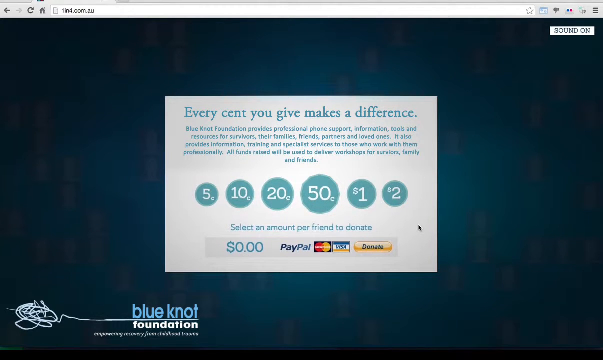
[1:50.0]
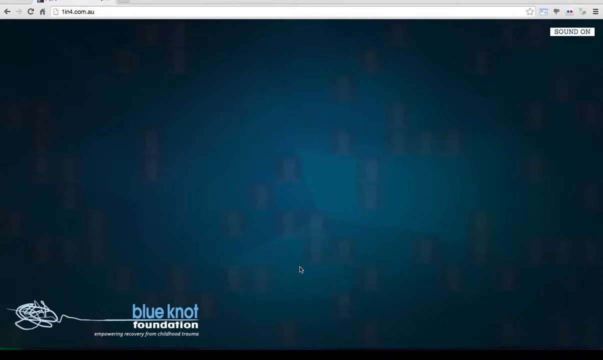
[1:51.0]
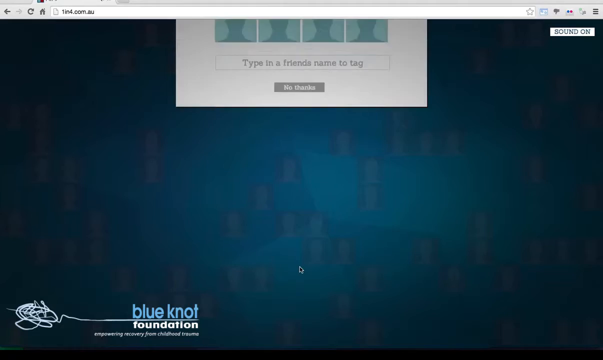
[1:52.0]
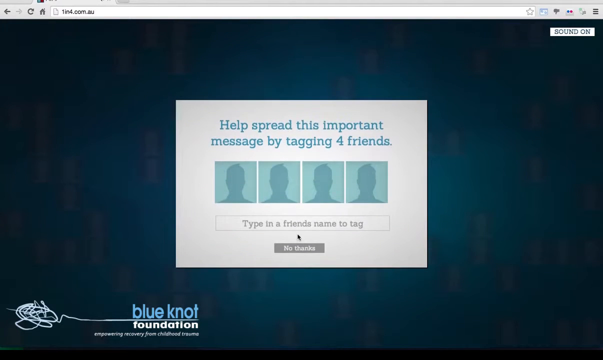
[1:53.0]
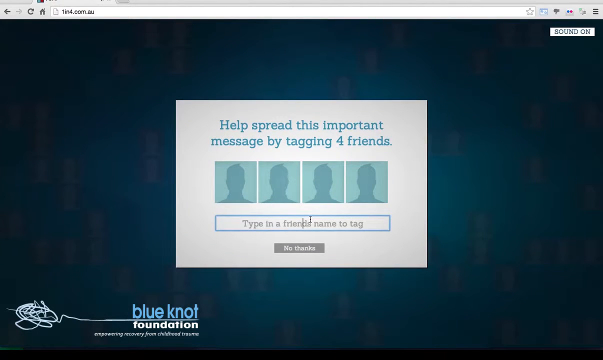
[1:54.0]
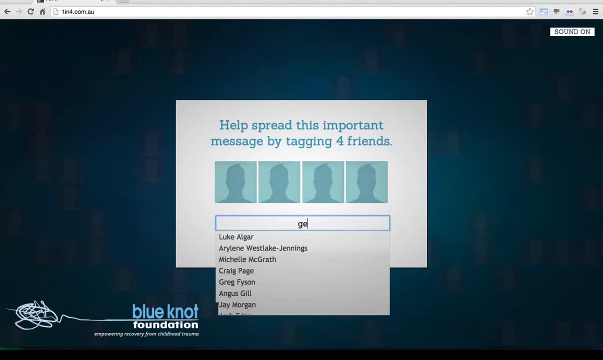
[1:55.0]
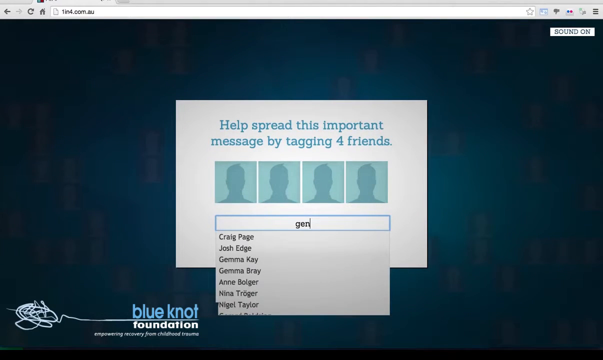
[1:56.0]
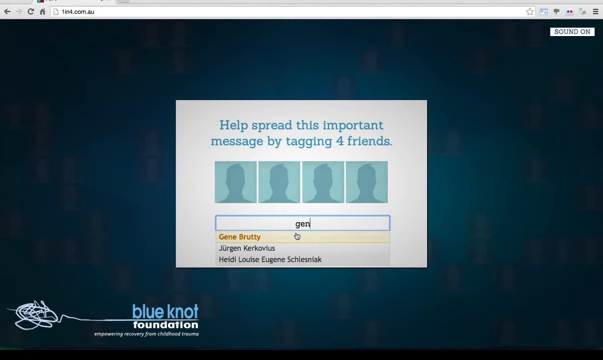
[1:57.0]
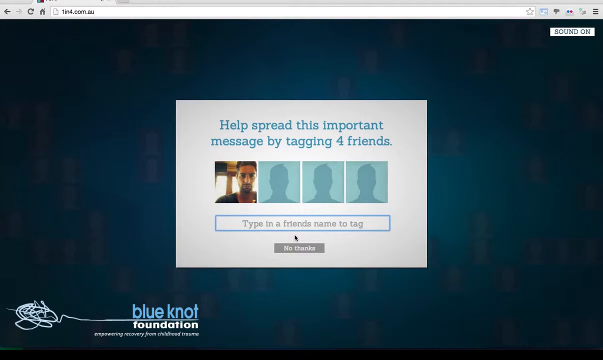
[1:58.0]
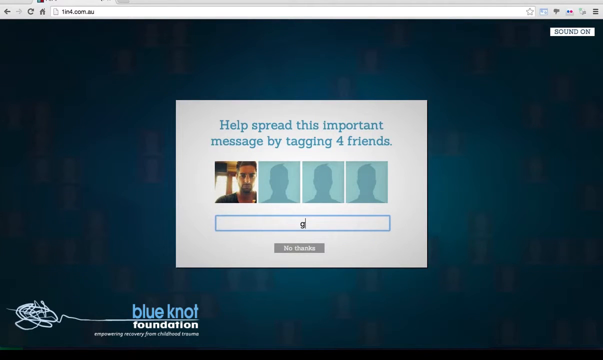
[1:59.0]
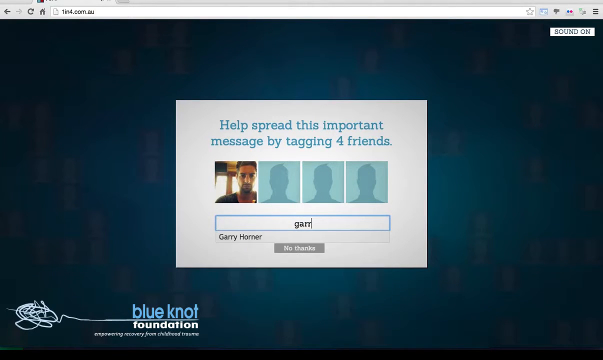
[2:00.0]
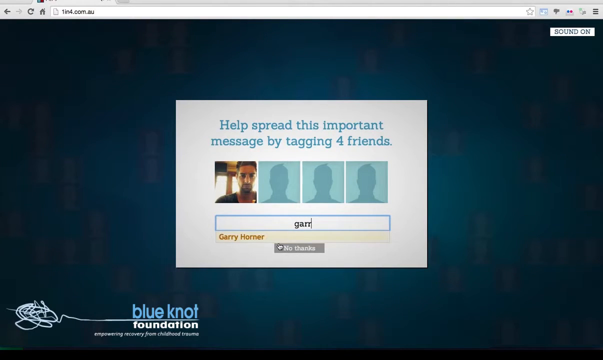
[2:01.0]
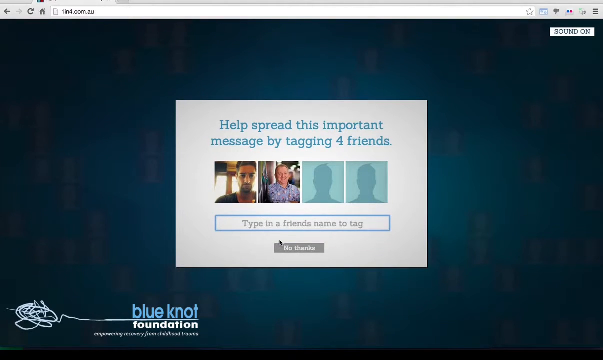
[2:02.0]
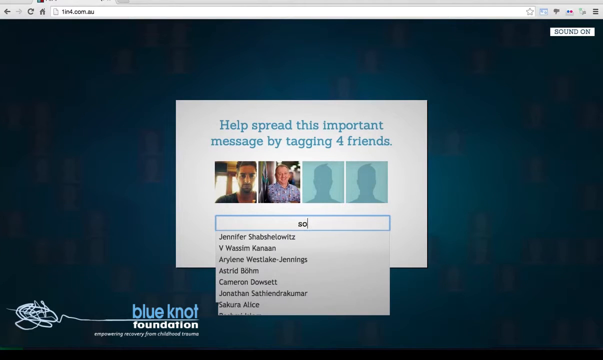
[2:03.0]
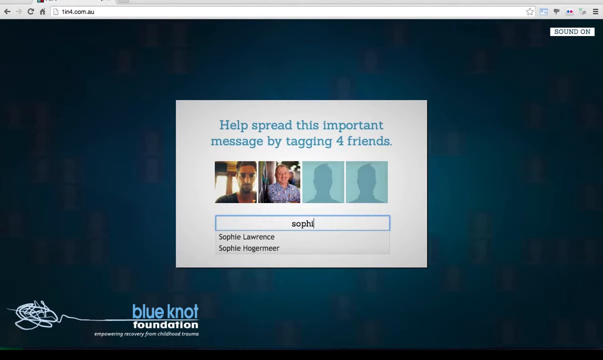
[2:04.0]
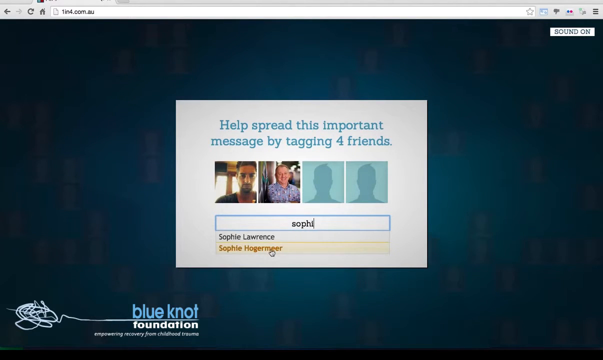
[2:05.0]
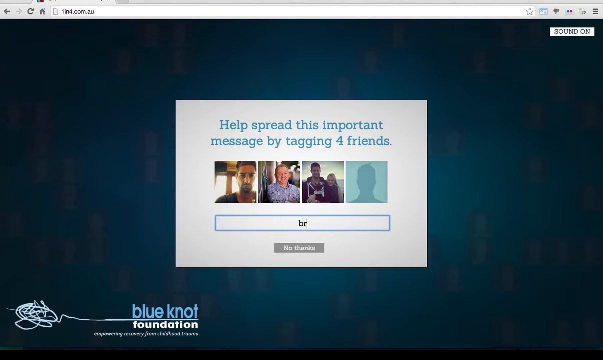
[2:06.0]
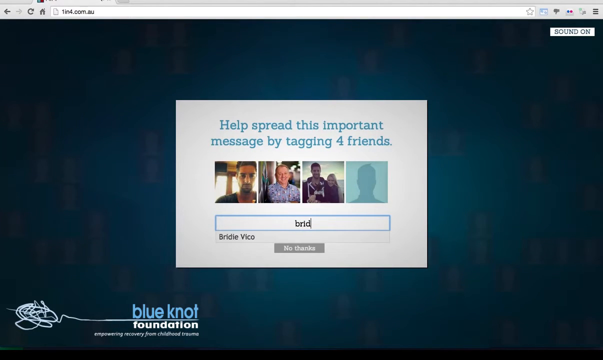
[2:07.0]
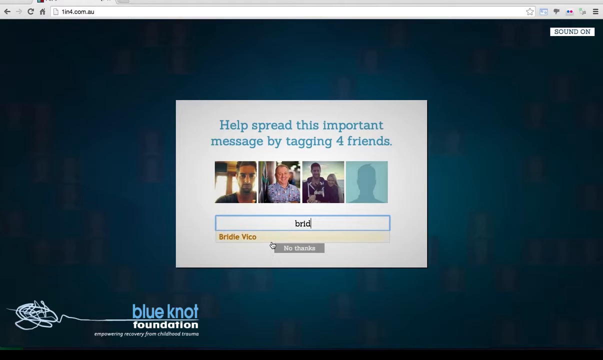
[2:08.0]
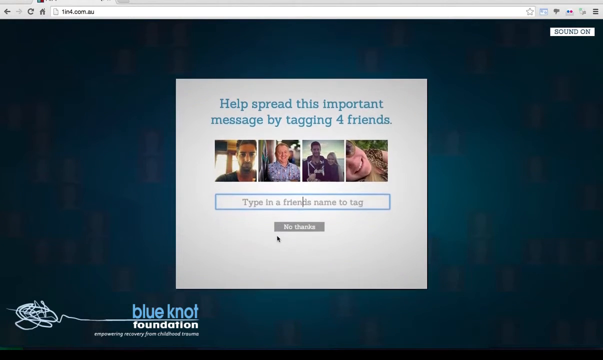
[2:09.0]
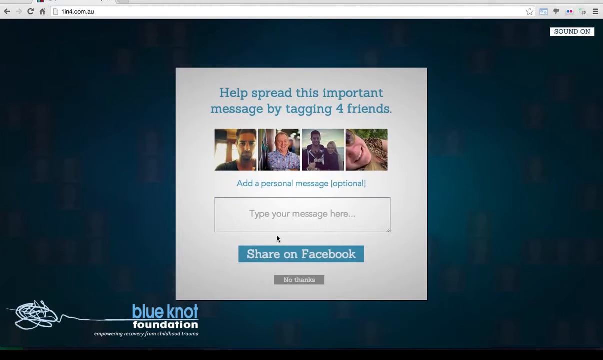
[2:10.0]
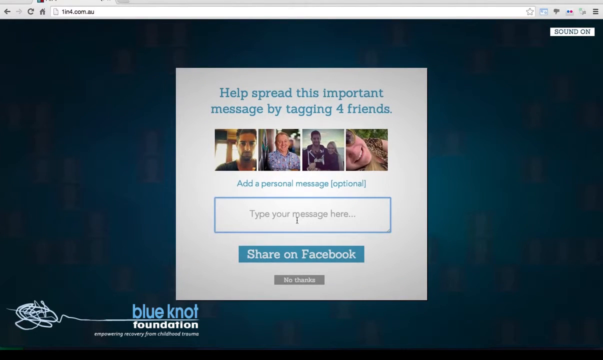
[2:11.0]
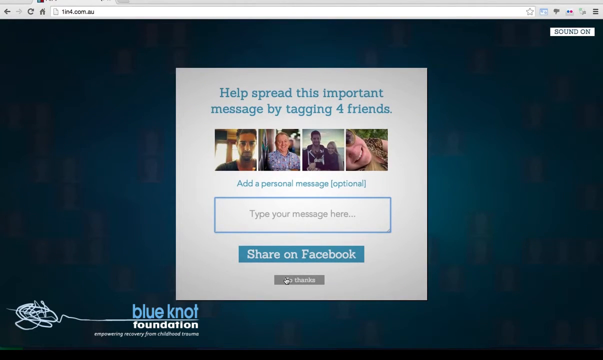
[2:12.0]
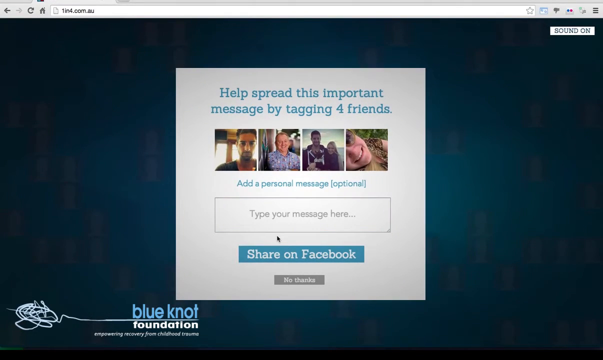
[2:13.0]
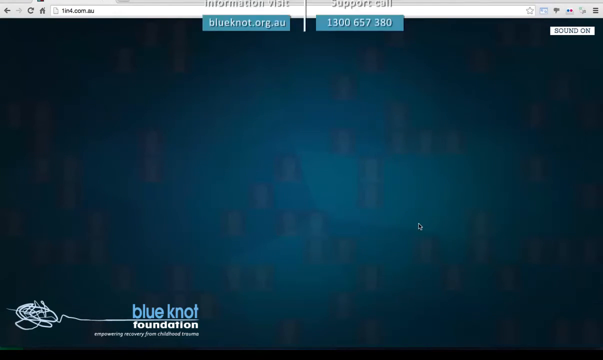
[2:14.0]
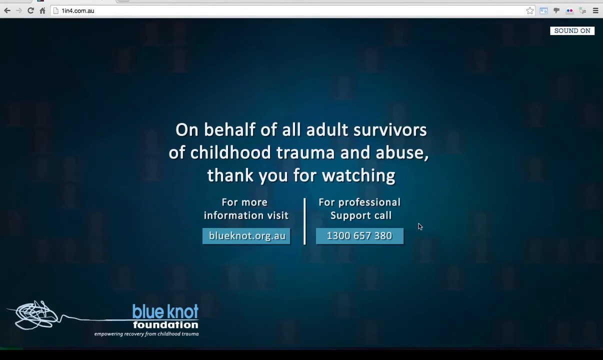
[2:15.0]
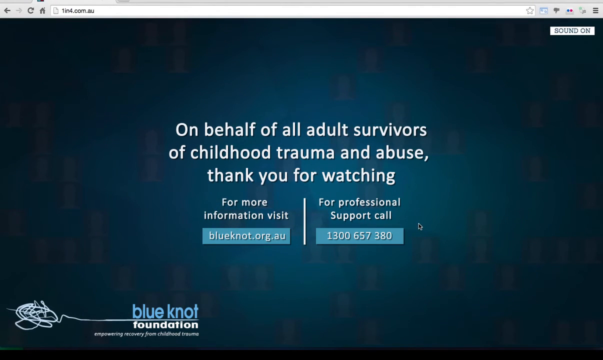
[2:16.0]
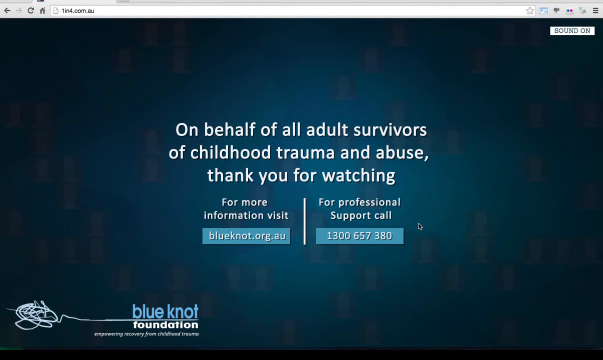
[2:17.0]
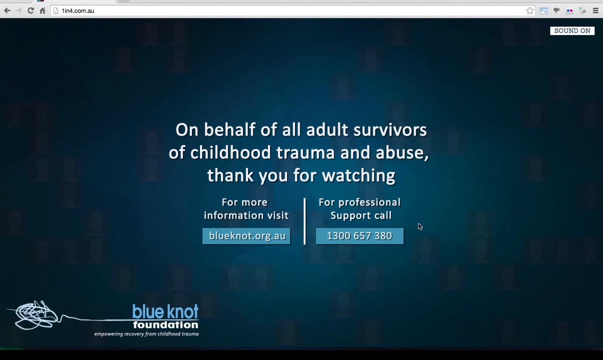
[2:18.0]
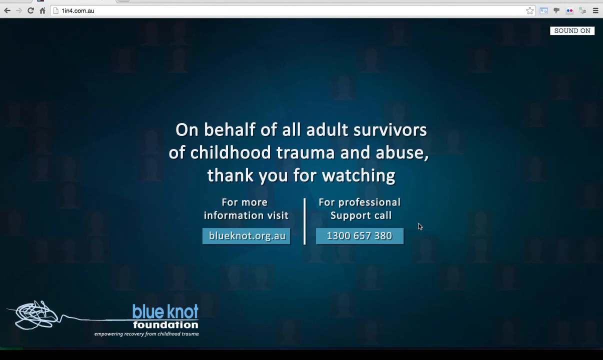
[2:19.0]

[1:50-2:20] The request for funding, "every cent you give make a difference," is on screen. A slide then offers the chance to tag friends, and four friends are tagged. Finally a thank-you slide with a dark background and white letters reads "on behalf of all adult survivors of childhood trauma and abuse. Thank you for watching," followed by "for more information, visit blue.org.au" and "for professional support call" with the phone number 1-300-657-380. The website and phone number are in white letters on a light blue sub-background, while the rest is white lettering directly on the darker background. The Blue Knot Foundation logo is in the lower left corner.